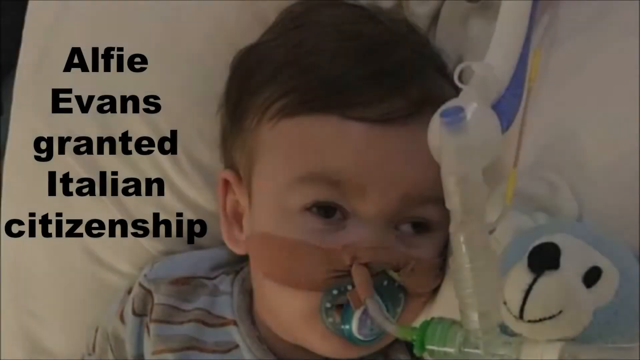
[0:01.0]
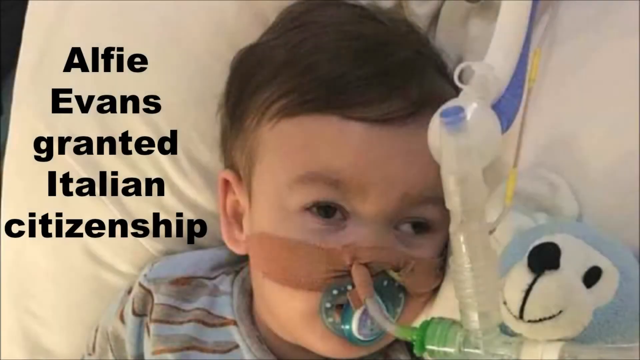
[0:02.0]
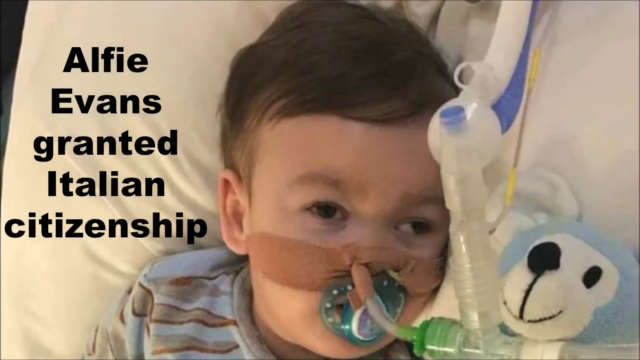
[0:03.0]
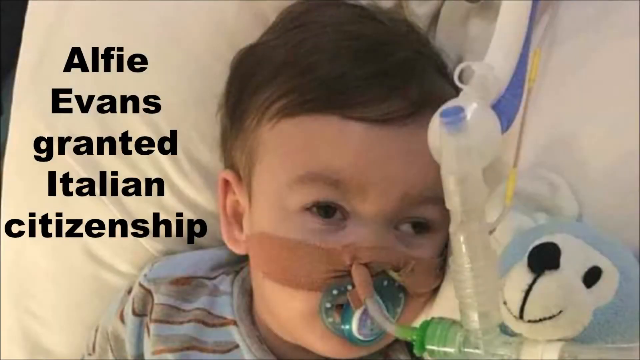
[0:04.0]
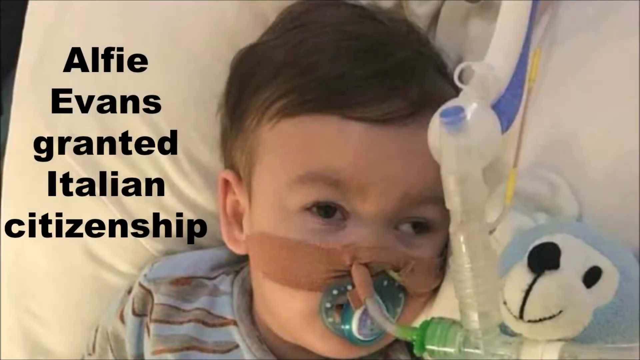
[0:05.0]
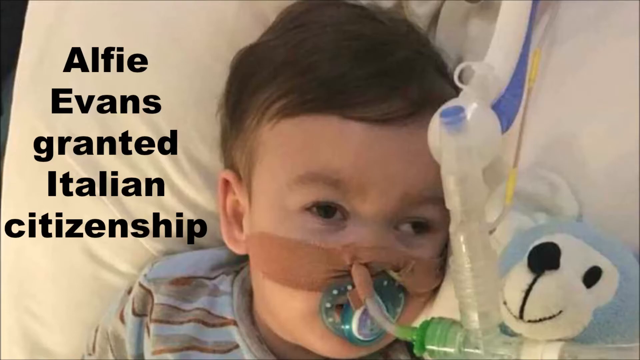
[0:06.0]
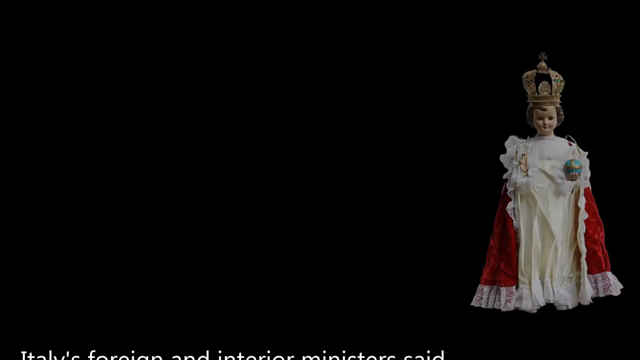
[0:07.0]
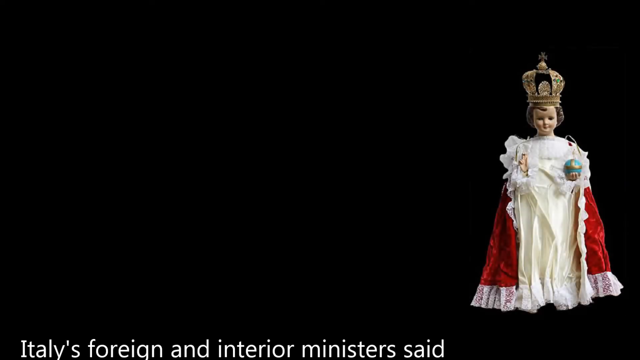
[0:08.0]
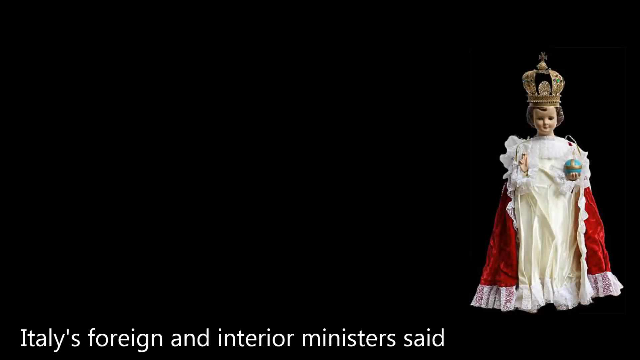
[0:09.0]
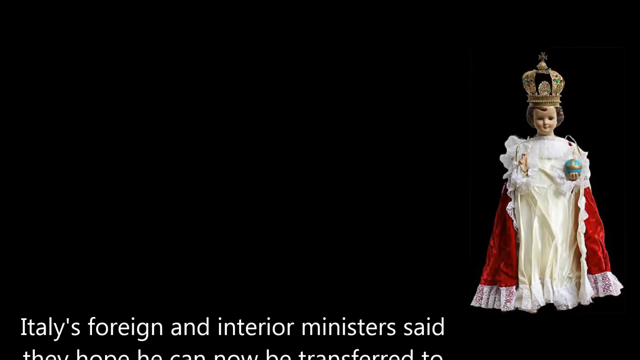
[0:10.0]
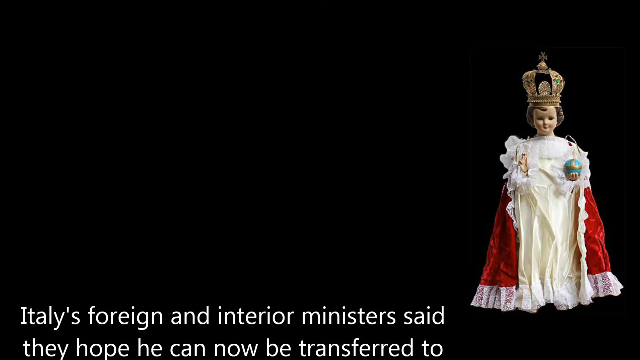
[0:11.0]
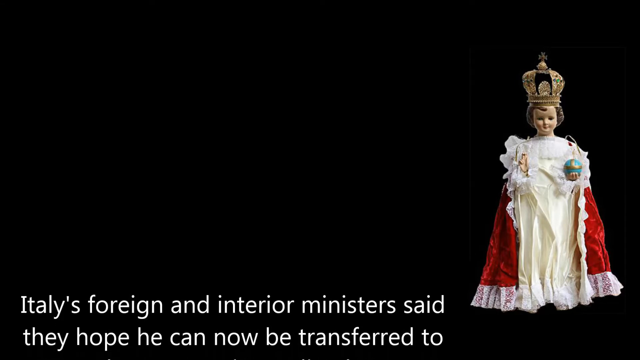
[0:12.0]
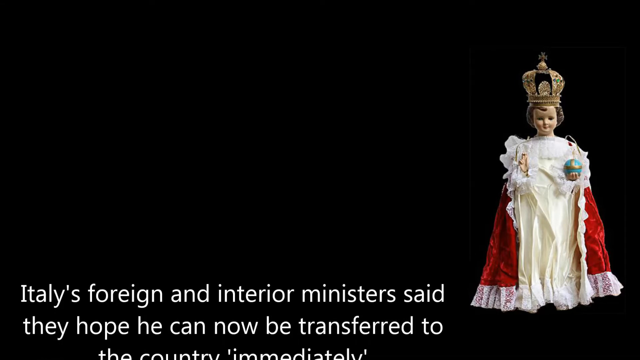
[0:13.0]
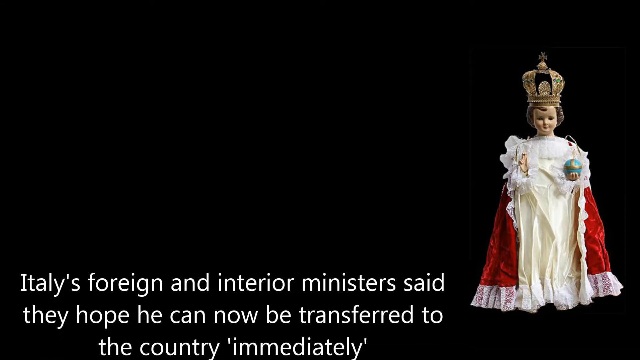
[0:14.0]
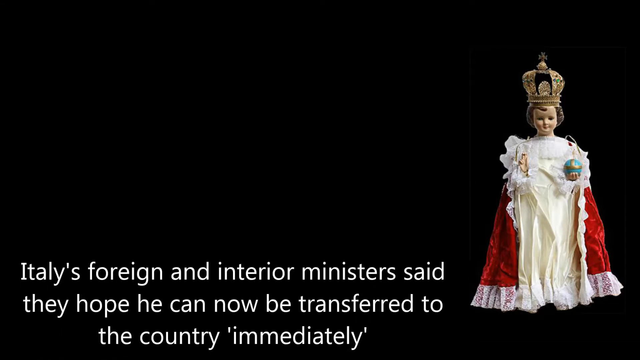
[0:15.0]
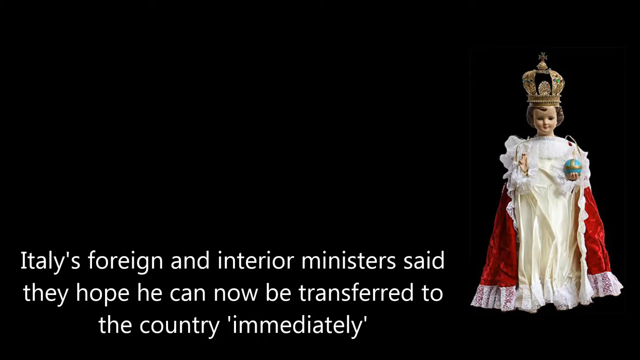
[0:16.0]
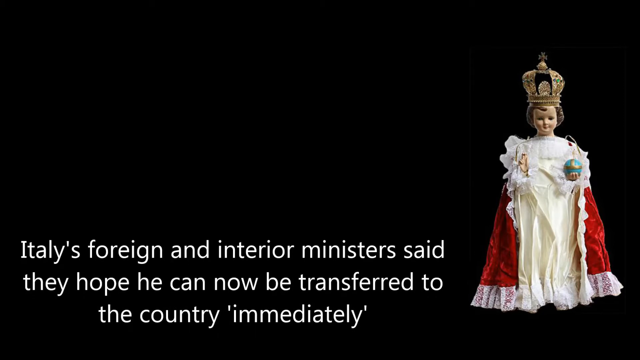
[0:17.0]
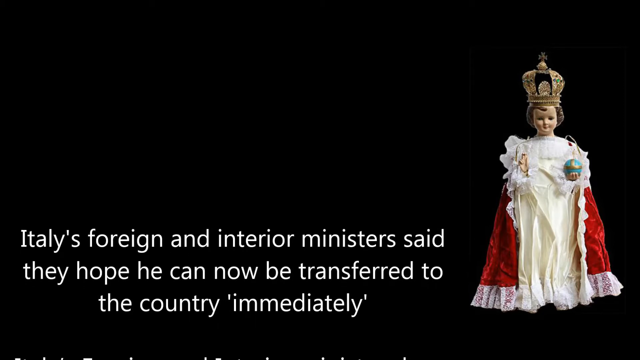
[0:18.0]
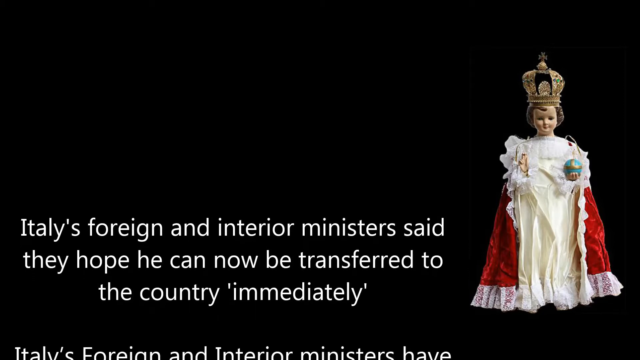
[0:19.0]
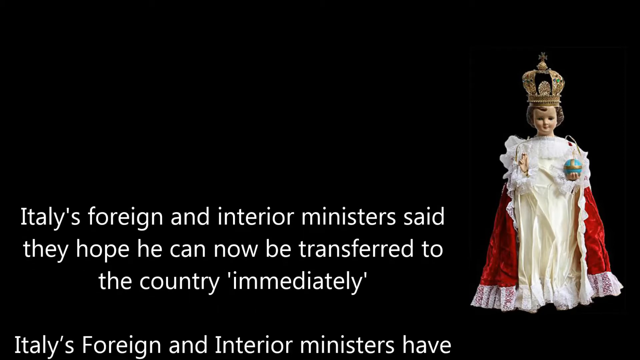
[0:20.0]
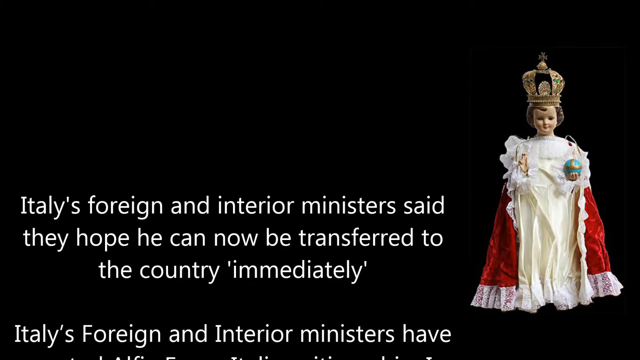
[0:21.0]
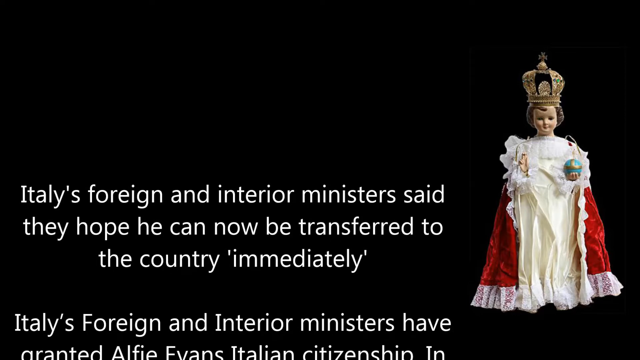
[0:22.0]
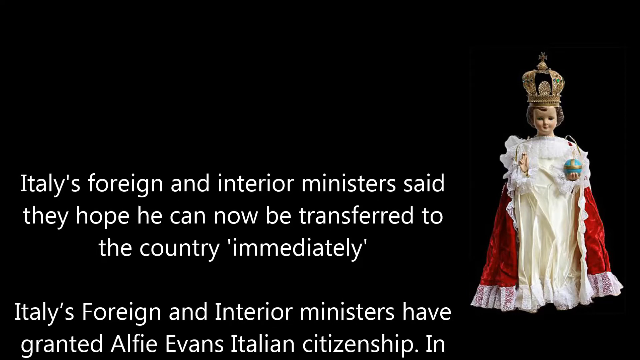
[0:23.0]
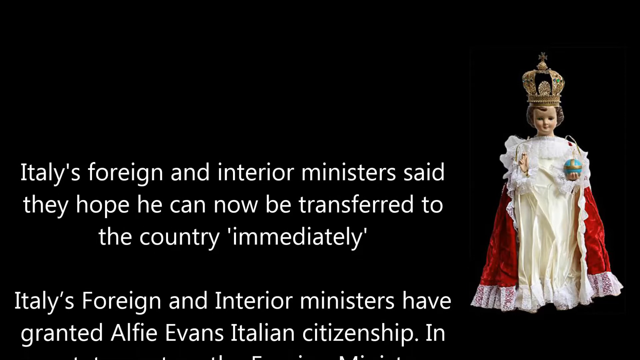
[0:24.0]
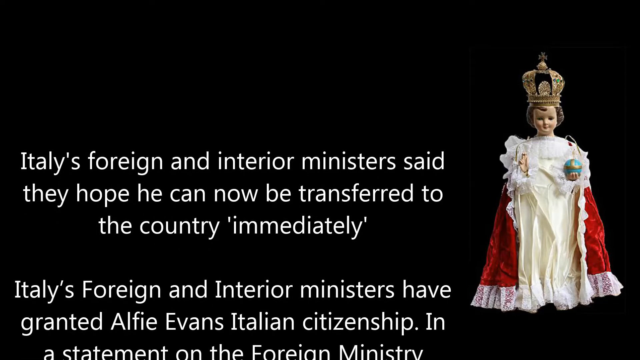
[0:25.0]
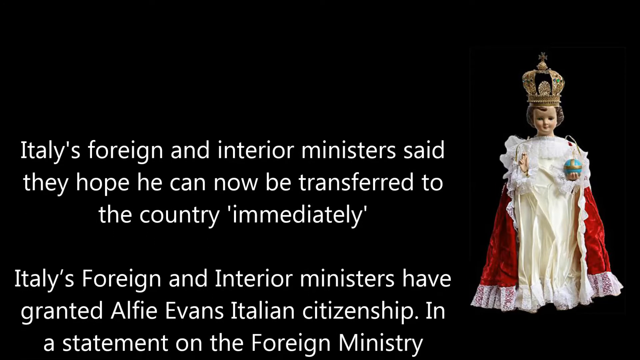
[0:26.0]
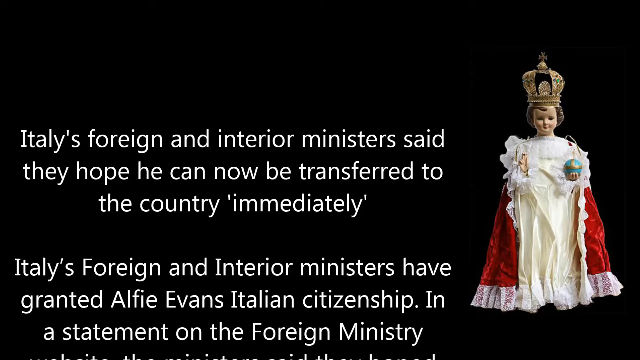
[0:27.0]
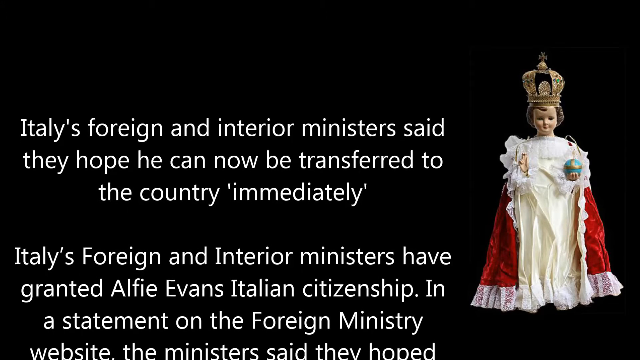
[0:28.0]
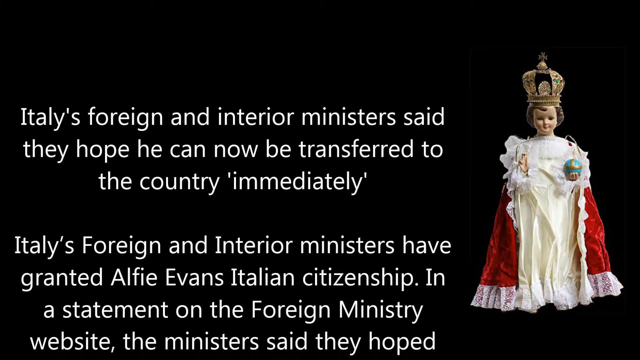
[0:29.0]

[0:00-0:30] The video fades in to a very young child, possibly an infant, connected to a ventilator or a breathing attachment to breathe. In black font next to the child is the title "Alfie Evans Granted Italian Citizenship." A blue teddy bear is to the right of the child. The scene transitions to a black background, with a doll on the right that is a king or queen of some sort, in a king's dress or queen's dress. White font scrolls up from the bottom with the words "Italy's foreign and interior ministers said they hope he can now be transferred to the country 'immediately'," with "immediately" in quotation marks. After a space, another paragraph fades up underneath: "Italy's foreign and interior ministers have granted Alfie Evans Italian citizenship in a statement on the foreign ministry Website The minister said they hoped." The scene then transitions to all black.